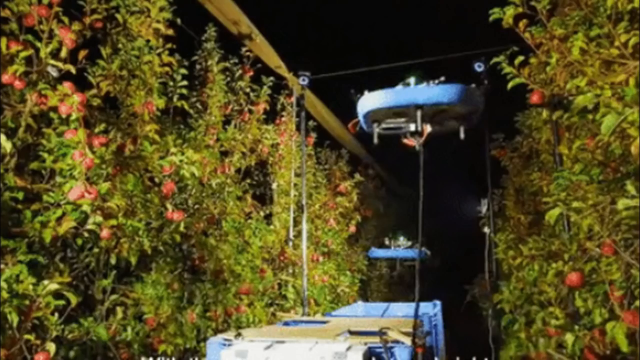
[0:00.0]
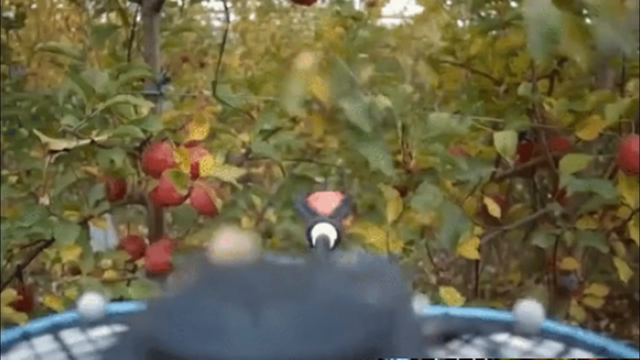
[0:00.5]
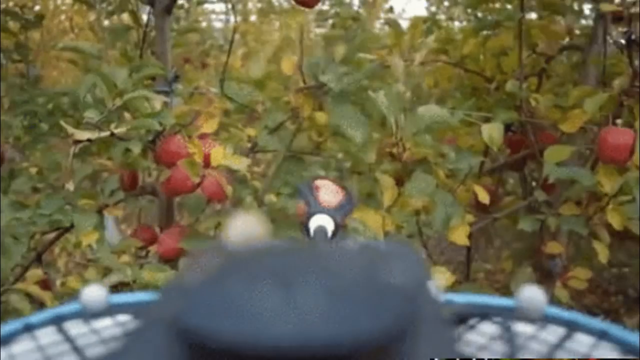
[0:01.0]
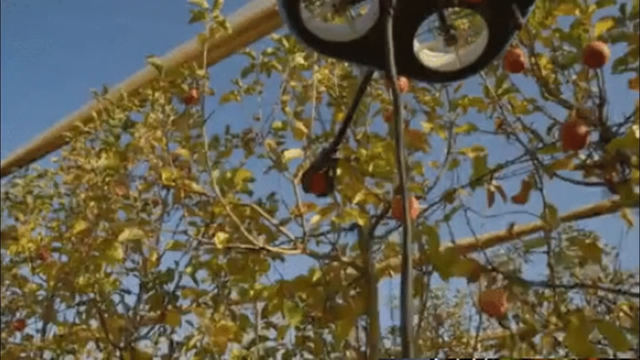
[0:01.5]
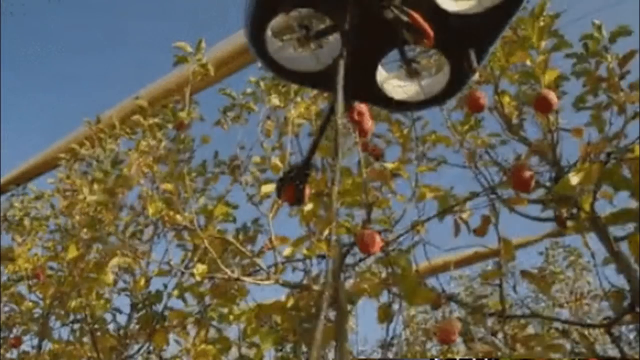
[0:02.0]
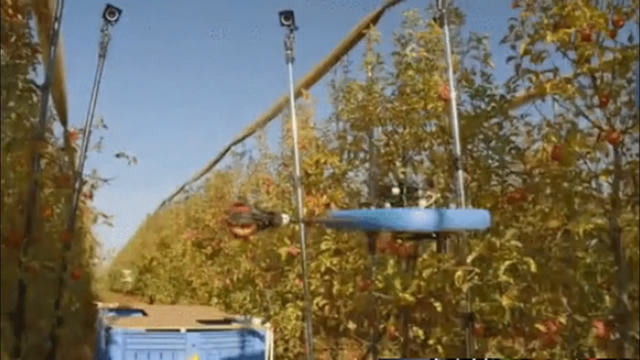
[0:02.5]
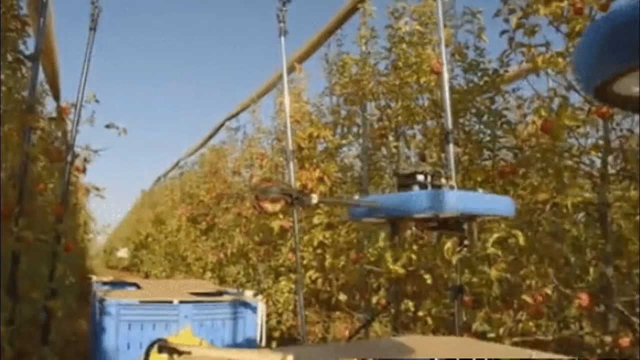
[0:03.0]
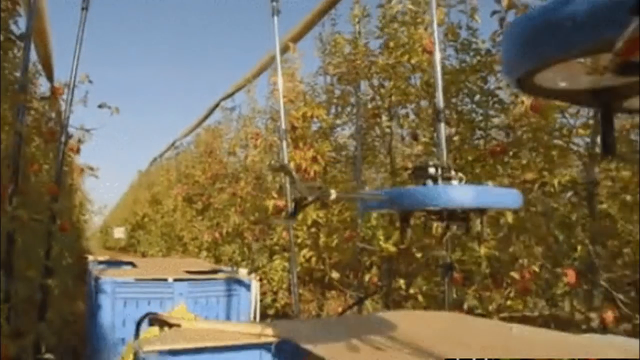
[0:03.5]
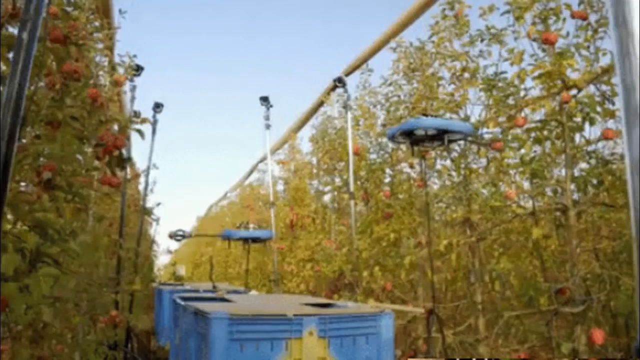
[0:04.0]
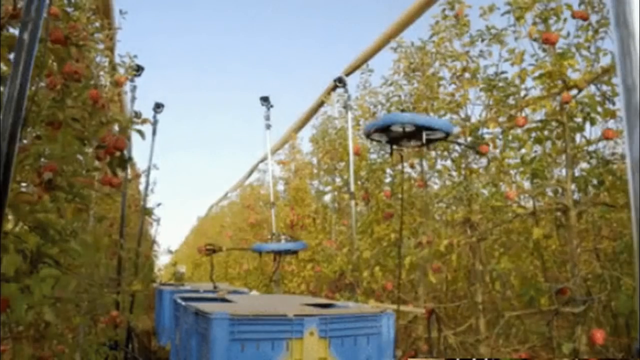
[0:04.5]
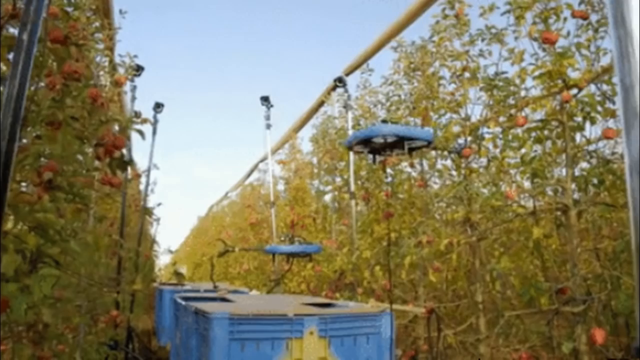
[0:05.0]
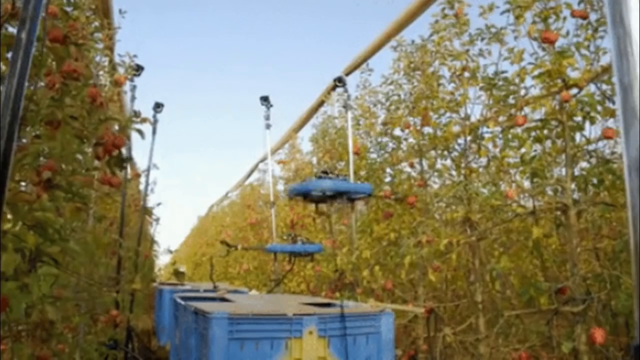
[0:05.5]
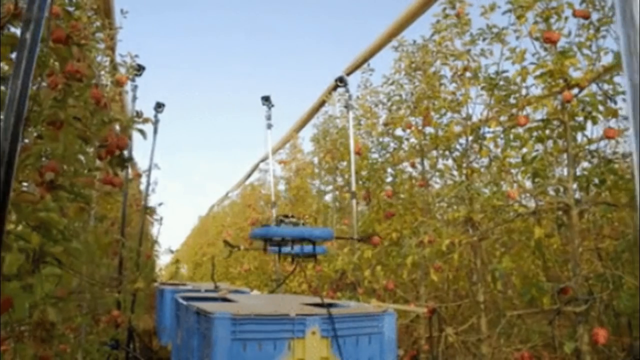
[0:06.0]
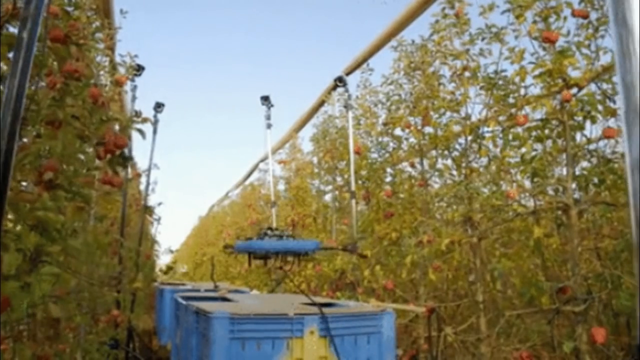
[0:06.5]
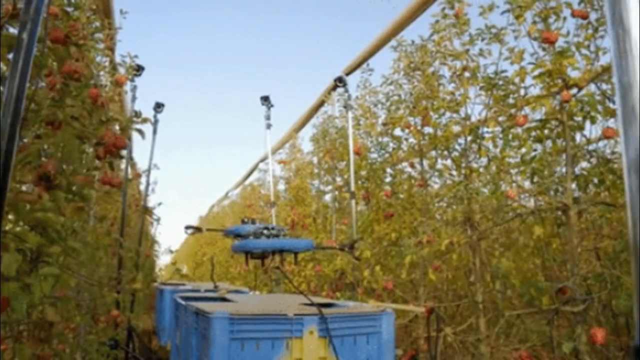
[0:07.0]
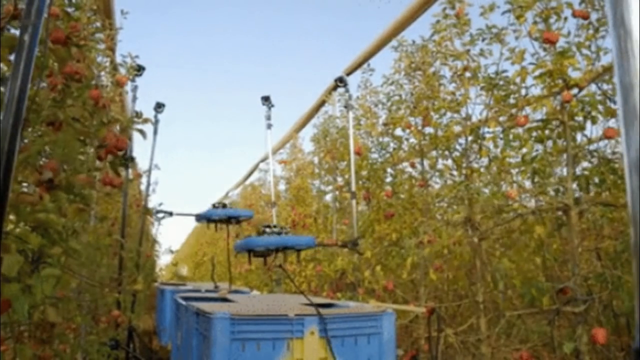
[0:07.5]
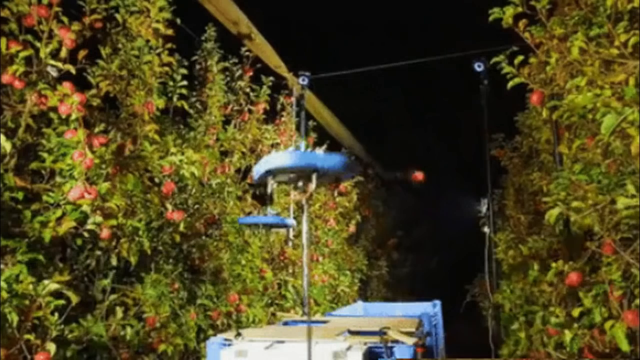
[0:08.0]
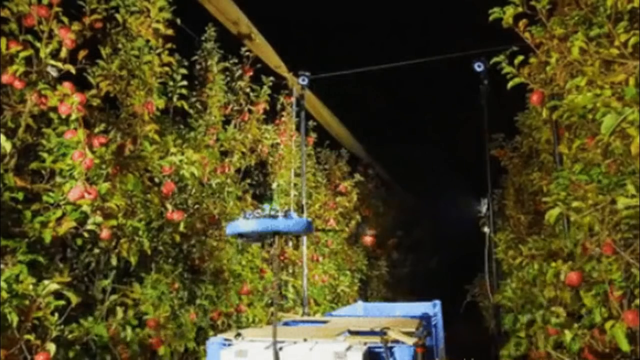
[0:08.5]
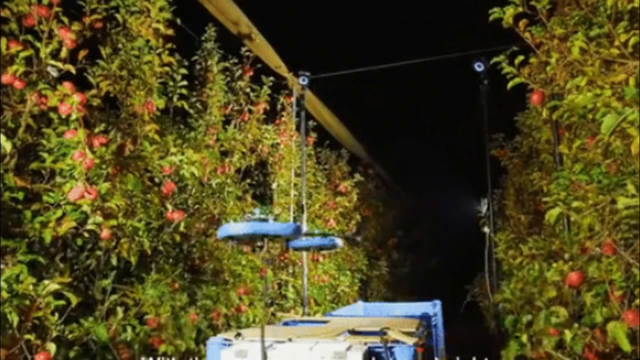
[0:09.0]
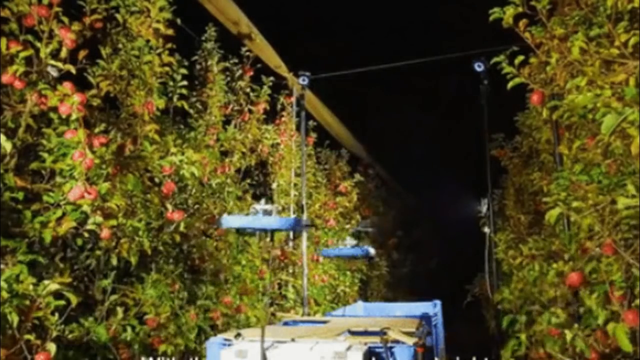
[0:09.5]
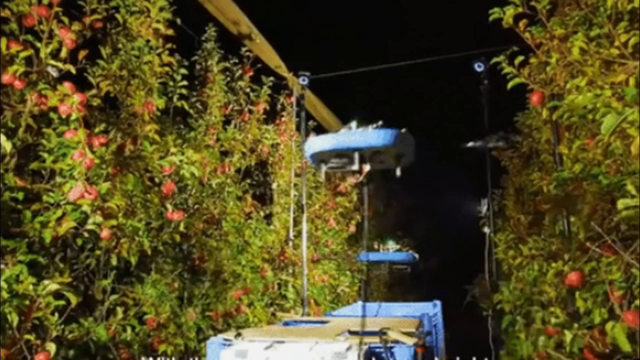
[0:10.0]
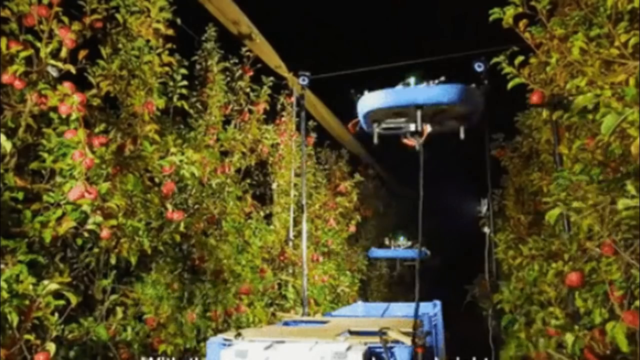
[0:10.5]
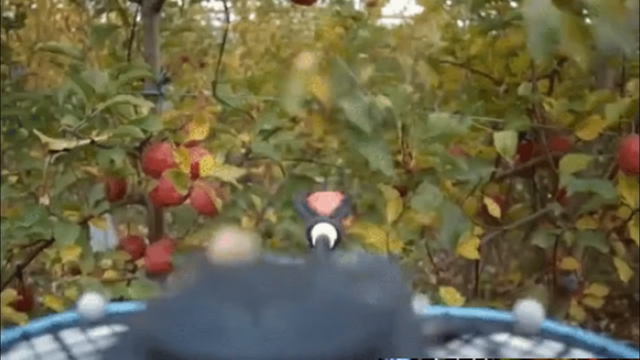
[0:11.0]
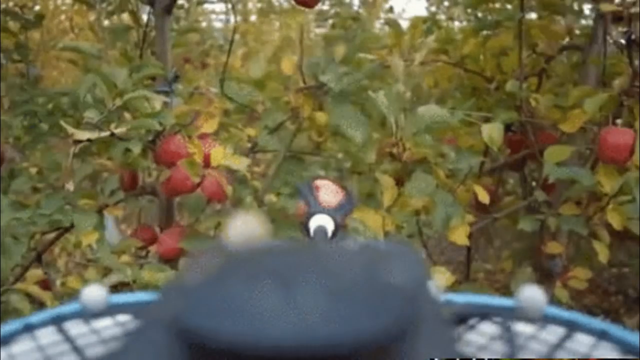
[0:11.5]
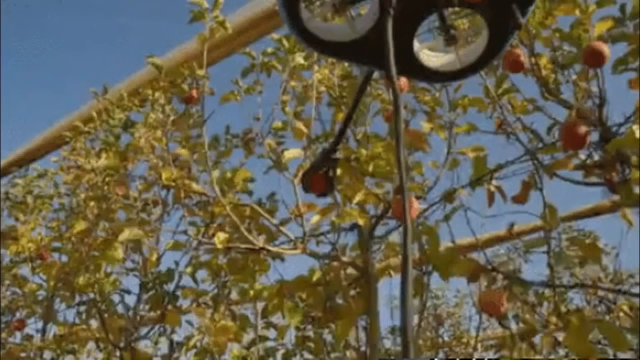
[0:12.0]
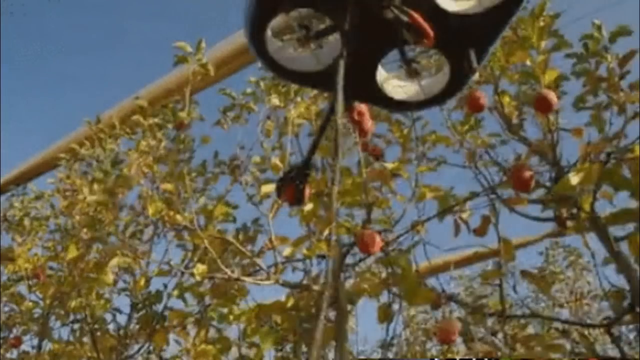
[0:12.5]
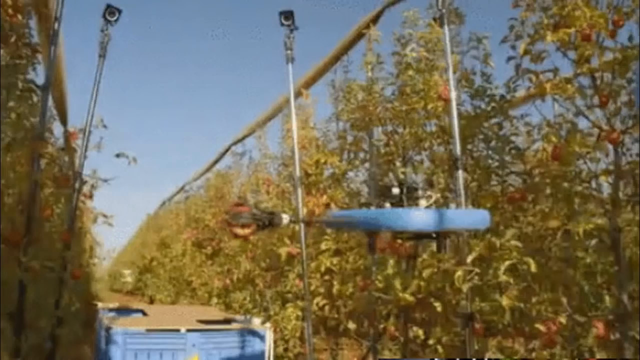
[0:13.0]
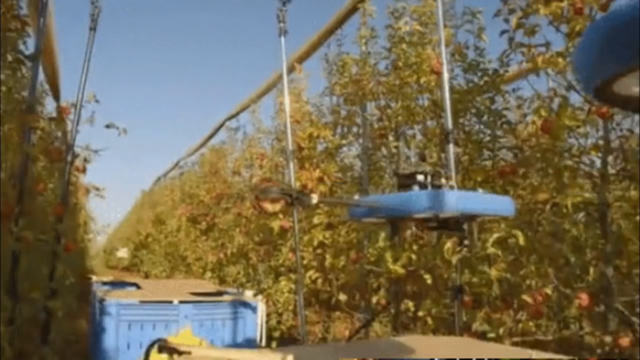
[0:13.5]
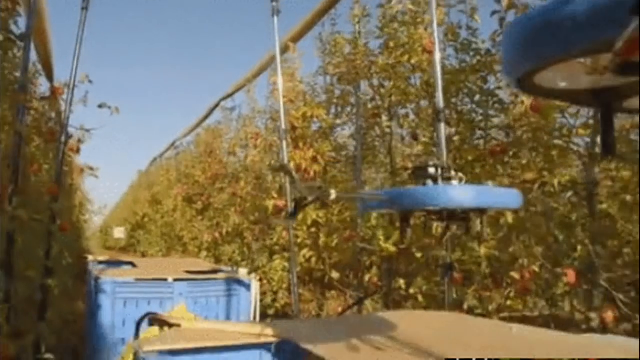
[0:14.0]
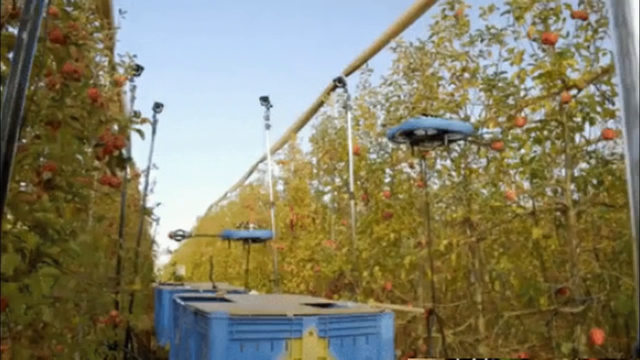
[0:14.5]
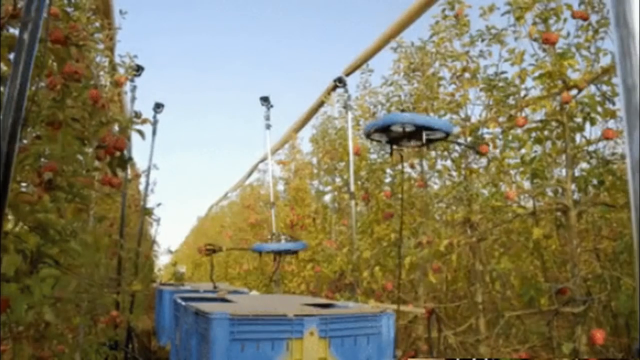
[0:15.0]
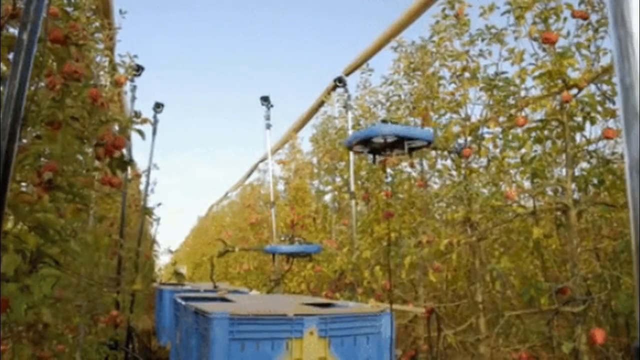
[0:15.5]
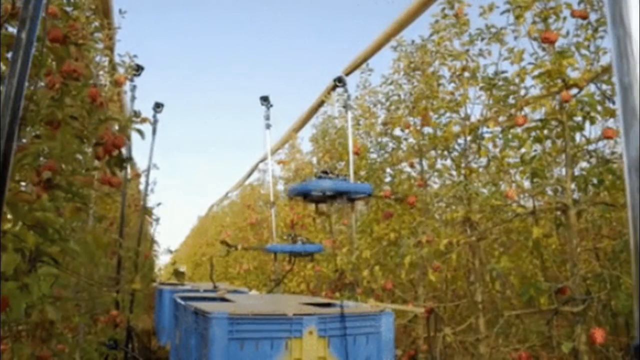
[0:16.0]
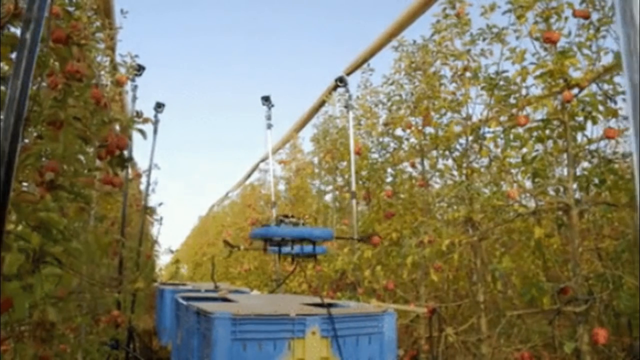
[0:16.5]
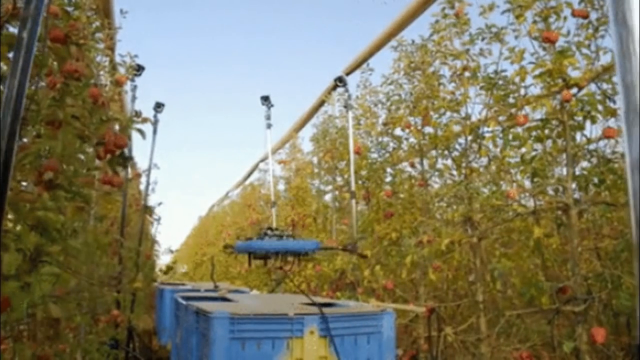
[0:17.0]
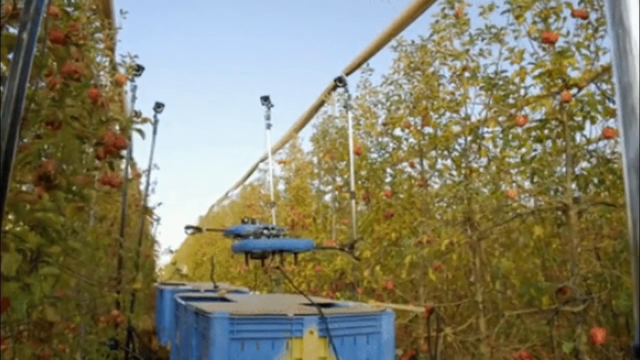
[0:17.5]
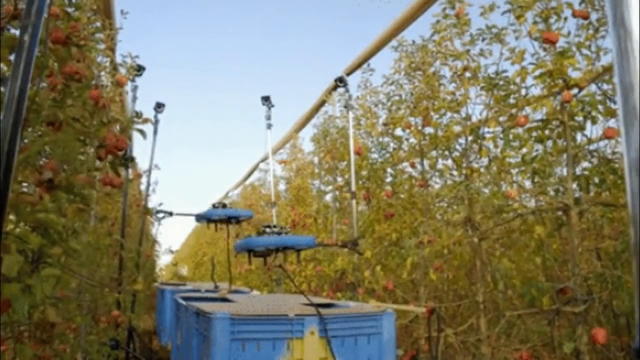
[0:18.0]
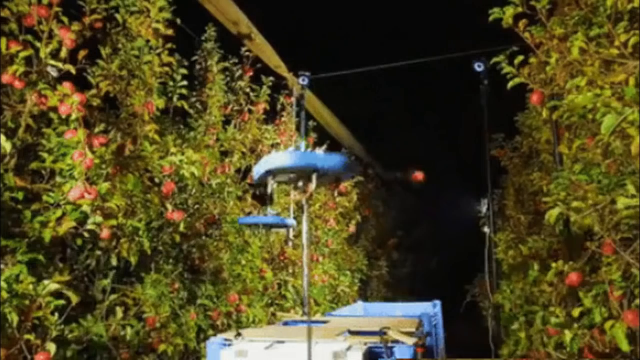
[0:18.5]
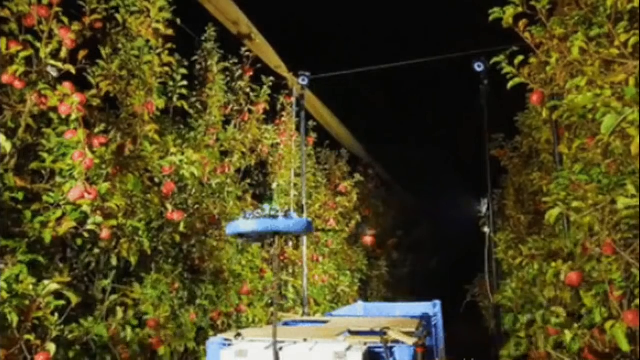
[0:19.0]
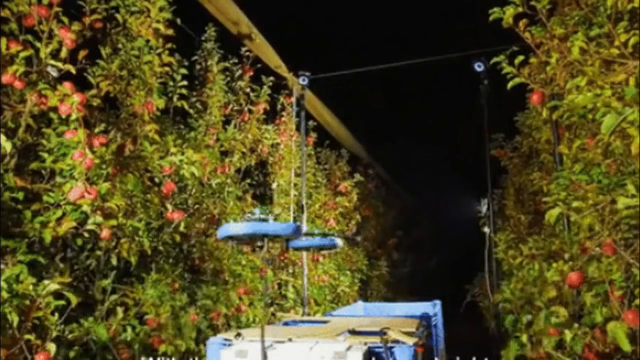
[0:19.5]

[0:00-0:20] Dense foliage fills the view, with fruit on it that looks almost like peaches or nectarines. There also appear to be some type of devices, possibly for watering, which are blue and connected to something. The trees seem to be a large, mass-produced planting rather than ordinary fruit trees. The scene is shown in the daytime and then at night. Two large metal equipment pieces are at the bottom, and the devices possibly connect to them. Some type of lighting also appears to be attached. Once it is dark, the fruit trees on both sides are still illuminated by these lights; the equipment apparently either illuminates the trees or possibly waters them in some way.